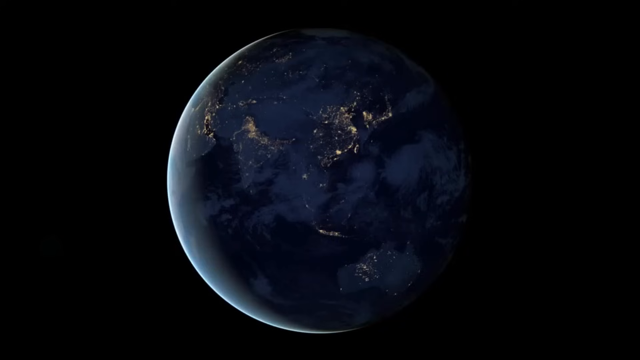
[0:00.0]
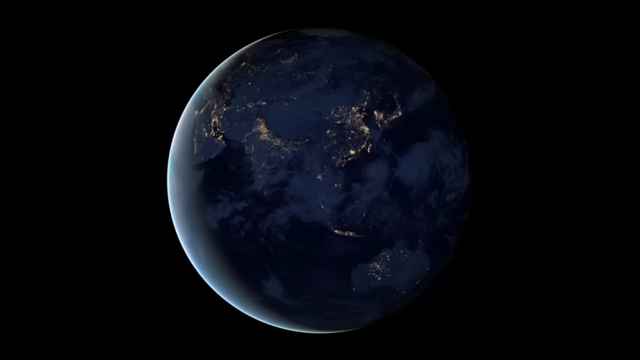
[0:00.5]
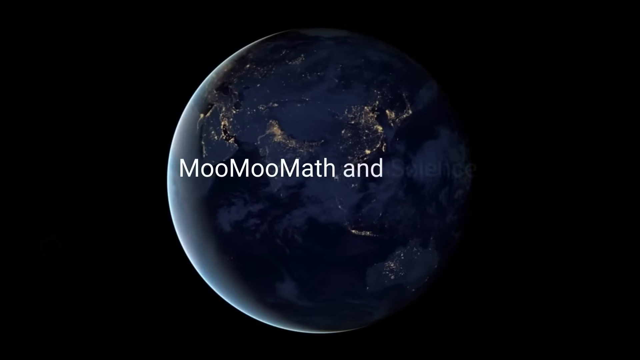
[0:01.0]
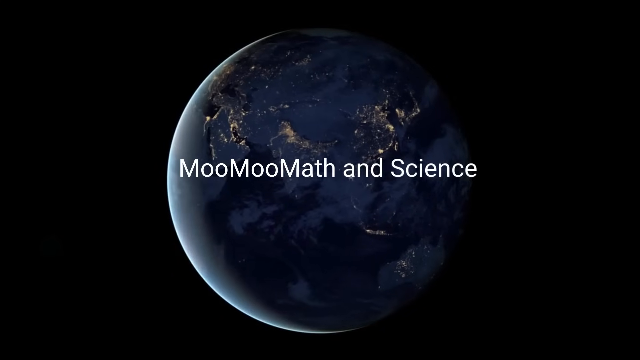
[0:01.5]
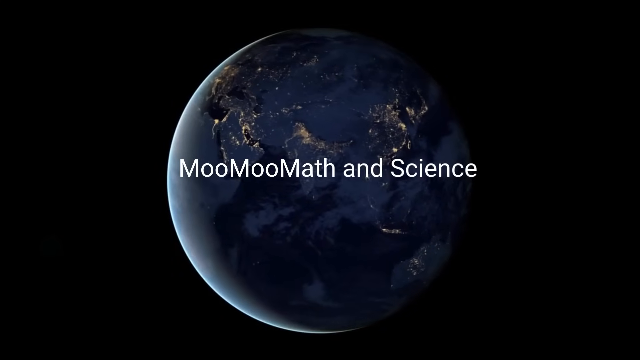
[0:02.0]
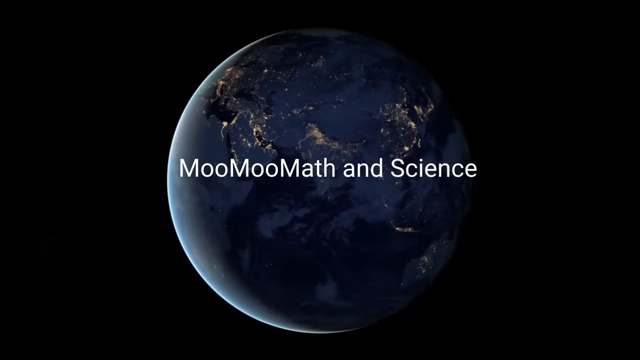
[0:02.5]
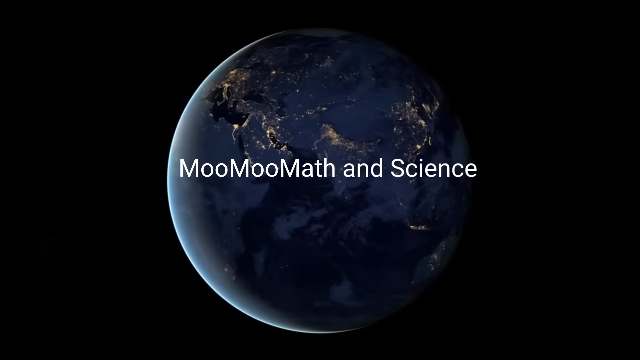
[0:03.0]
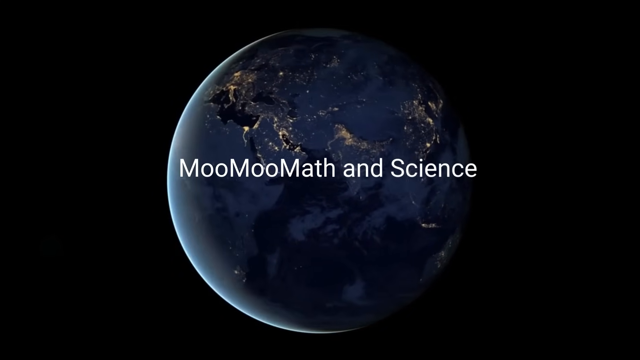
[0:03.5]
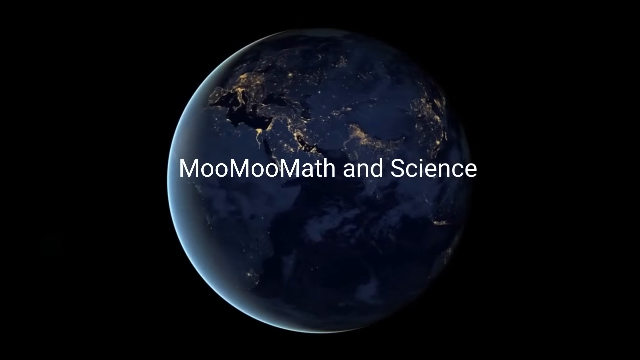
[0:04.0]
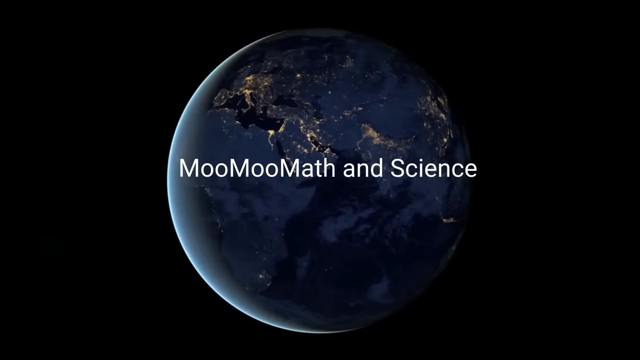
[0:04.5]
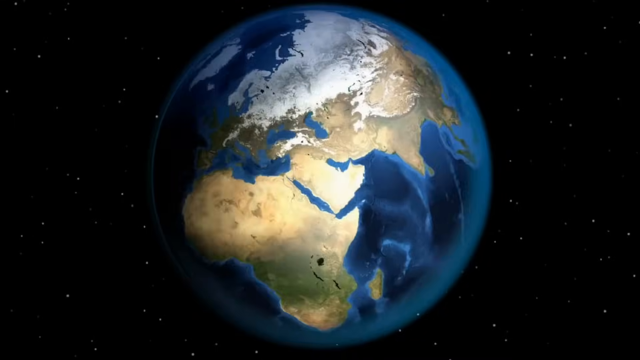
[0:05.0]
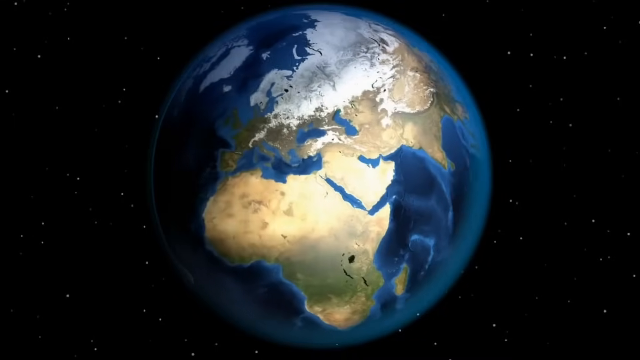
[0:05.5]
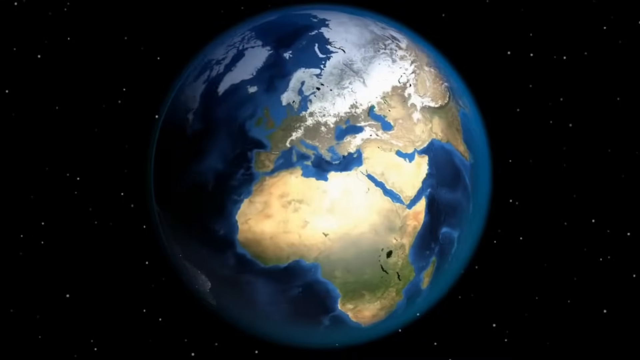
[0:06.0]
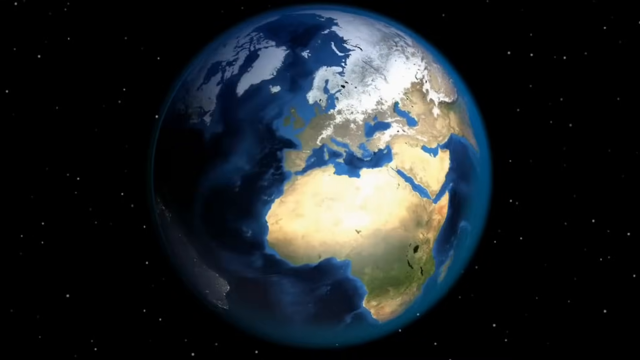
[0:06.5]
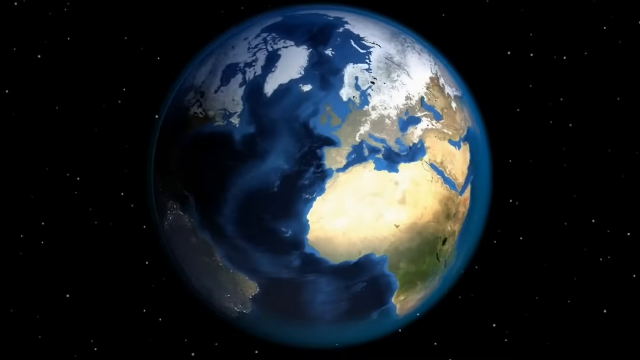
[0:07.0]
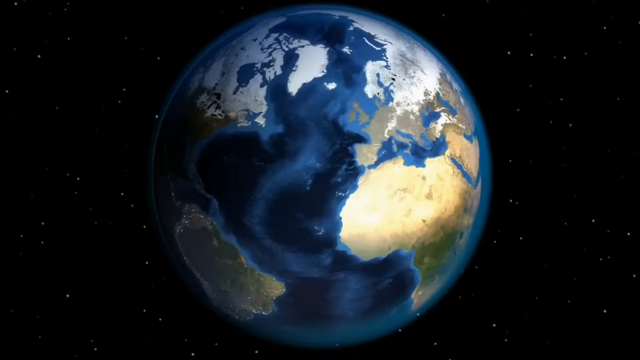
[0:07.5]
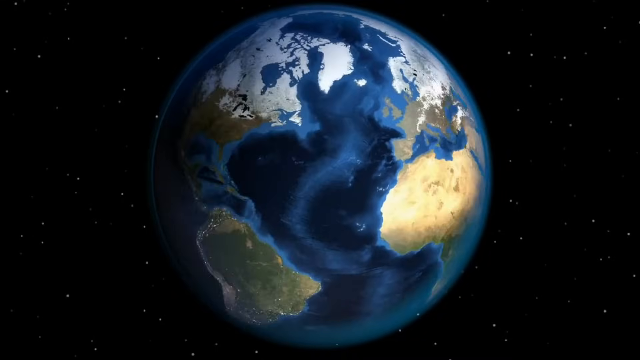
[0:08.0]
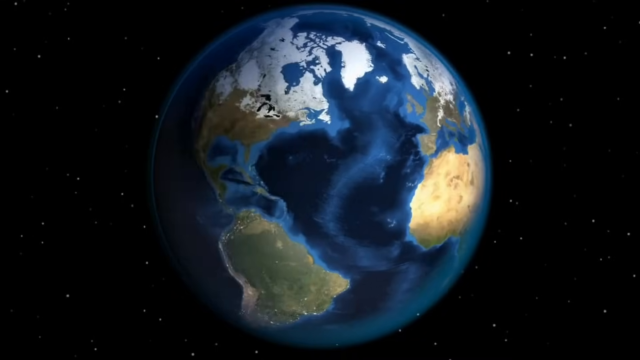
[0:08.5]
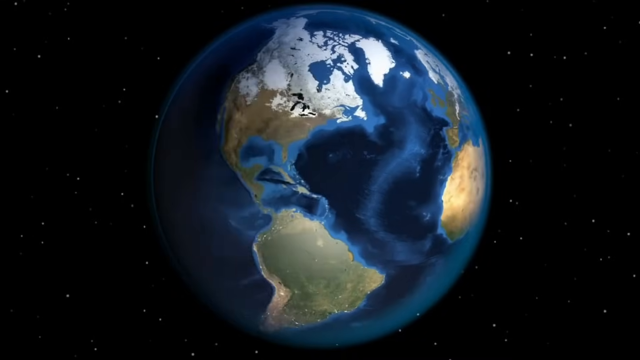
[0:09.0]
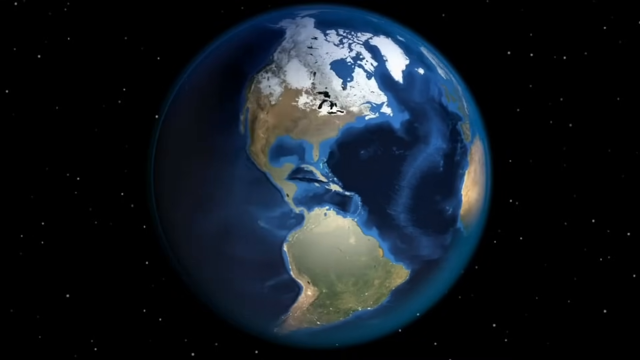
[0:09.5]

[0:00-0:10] The planet Earth rotates off to the right, and white text in the middle reads "Moo Moo Math and Science," apparently as an intro. At first the Earth has a dark hue, so little of its land mass is visible; it appears to be the dark side of the Earth. Halfway through, it transitions to the light side, where all the different land masses on the Earth can be seen.